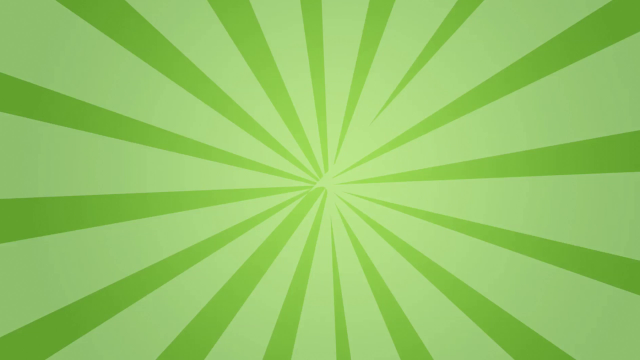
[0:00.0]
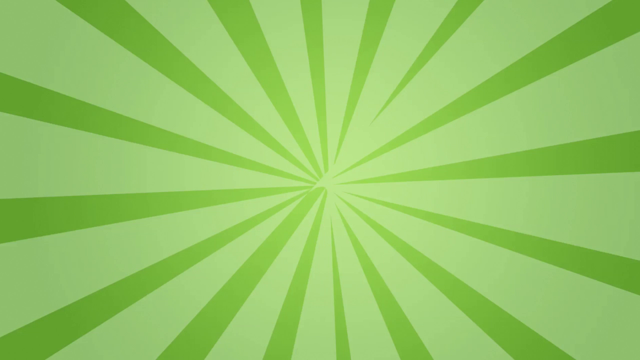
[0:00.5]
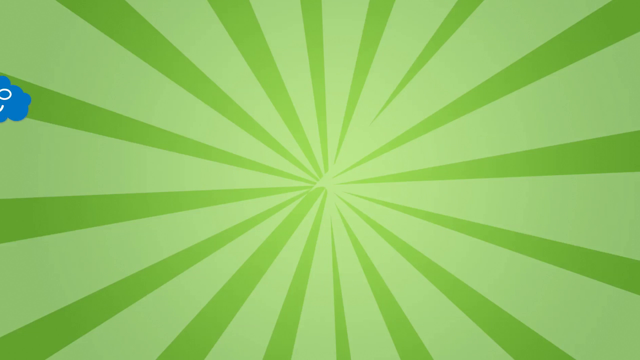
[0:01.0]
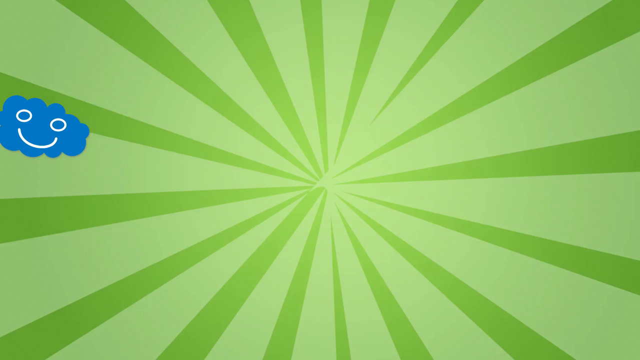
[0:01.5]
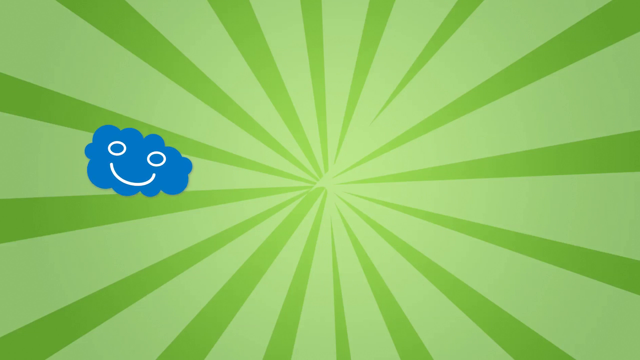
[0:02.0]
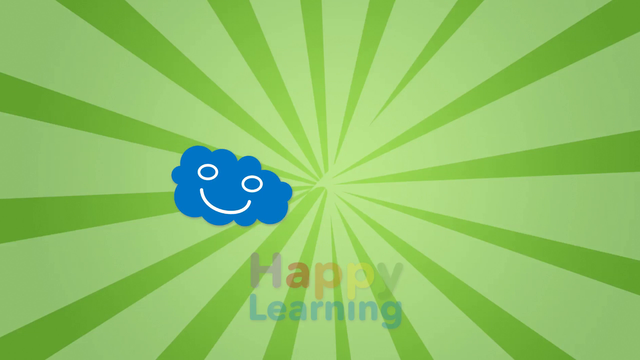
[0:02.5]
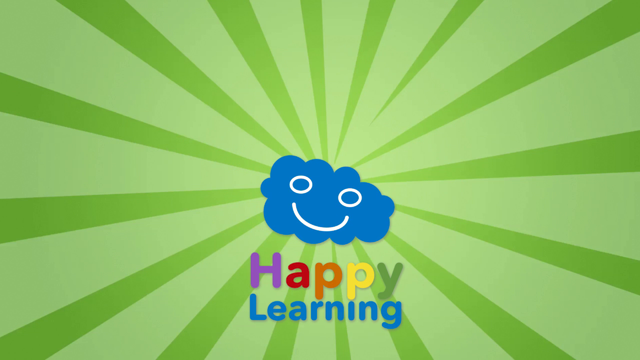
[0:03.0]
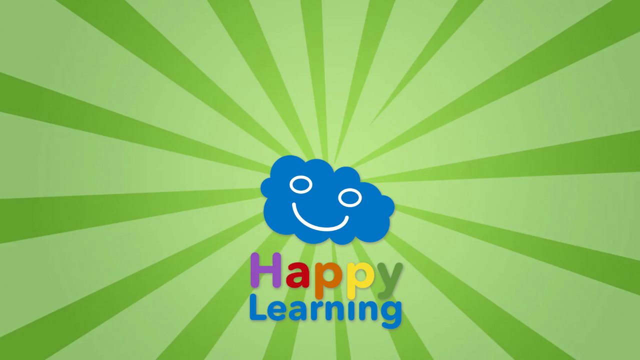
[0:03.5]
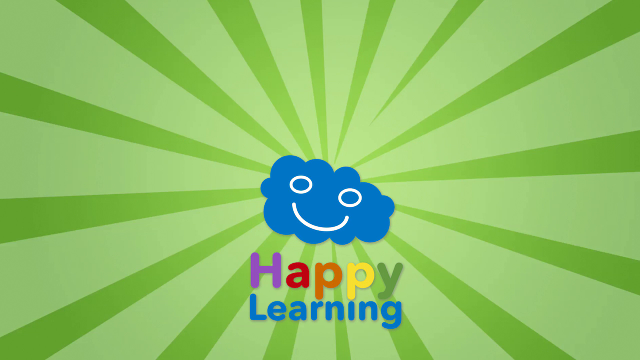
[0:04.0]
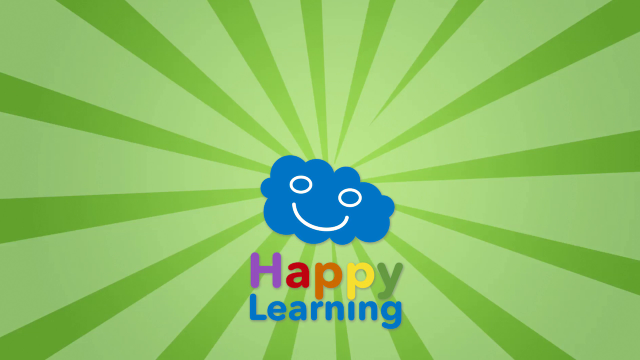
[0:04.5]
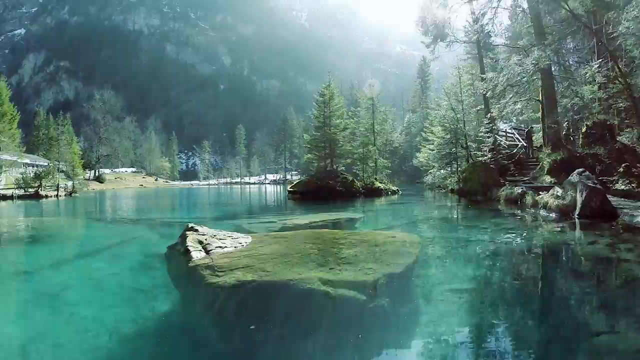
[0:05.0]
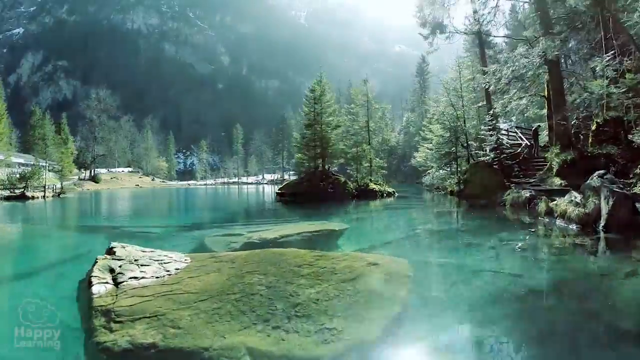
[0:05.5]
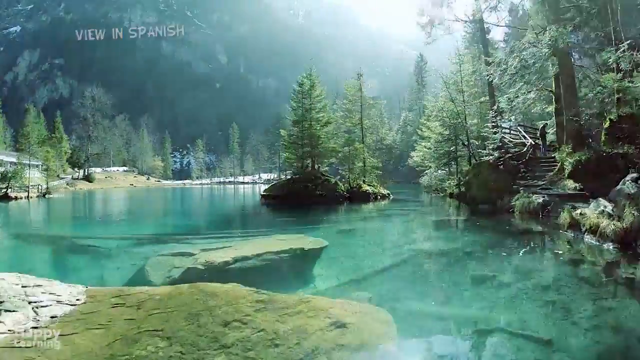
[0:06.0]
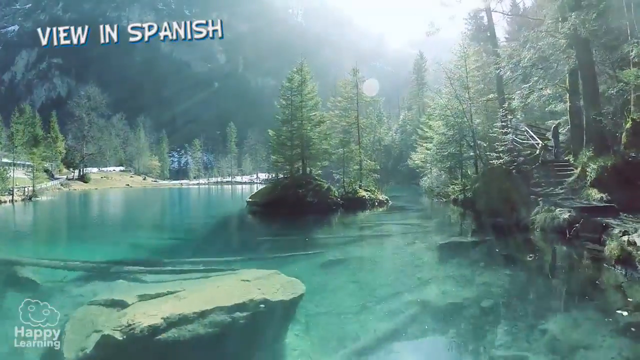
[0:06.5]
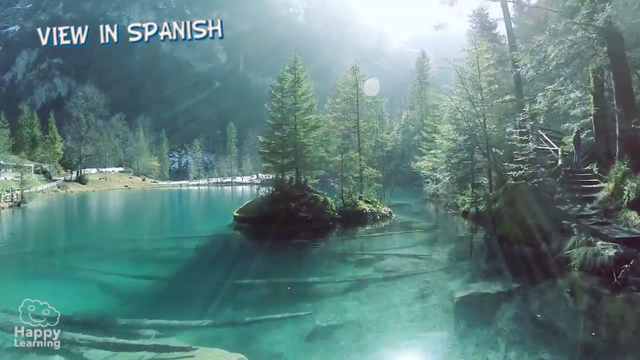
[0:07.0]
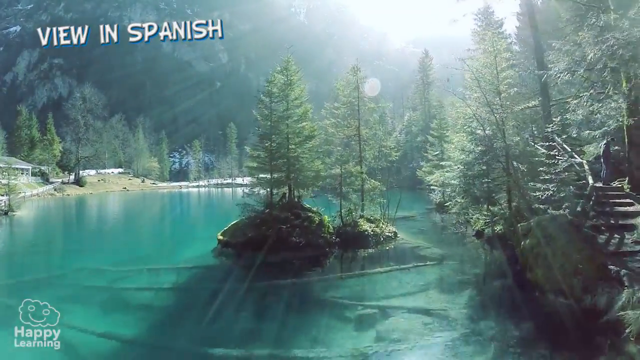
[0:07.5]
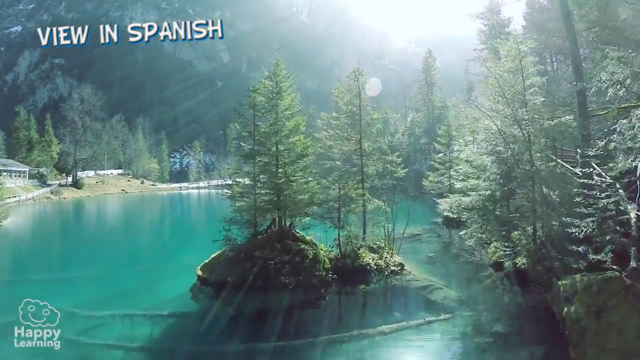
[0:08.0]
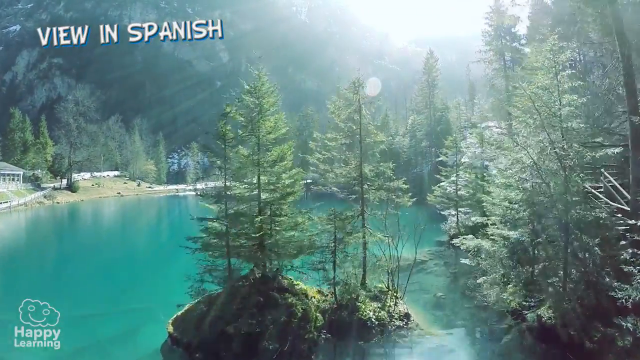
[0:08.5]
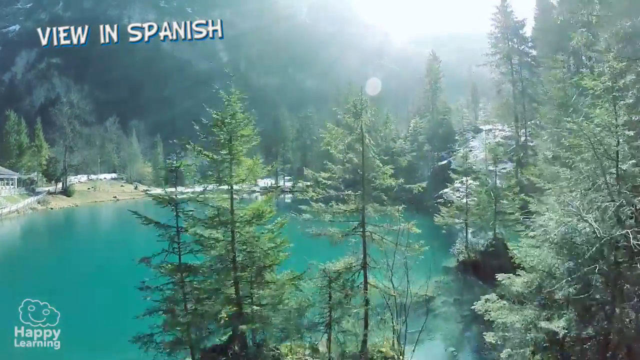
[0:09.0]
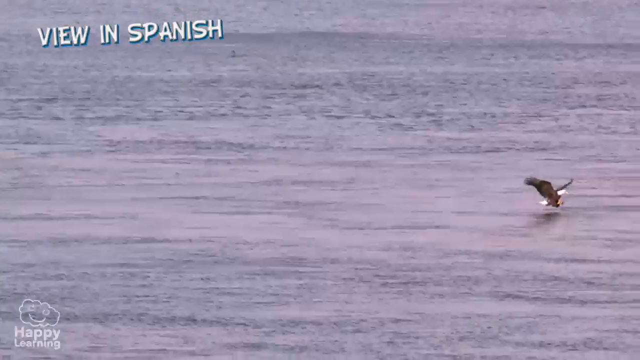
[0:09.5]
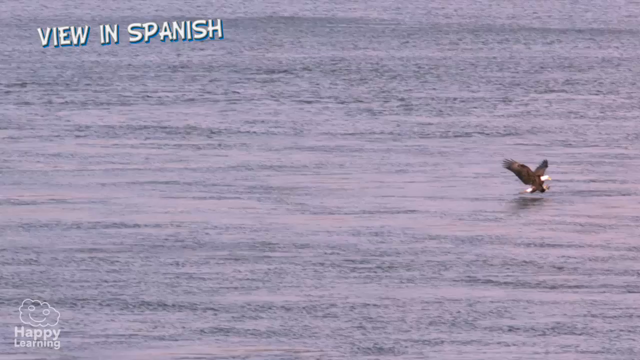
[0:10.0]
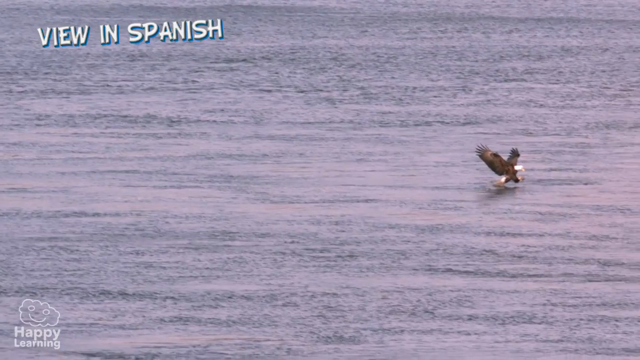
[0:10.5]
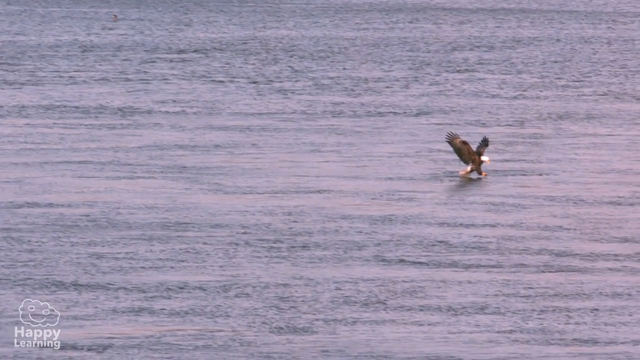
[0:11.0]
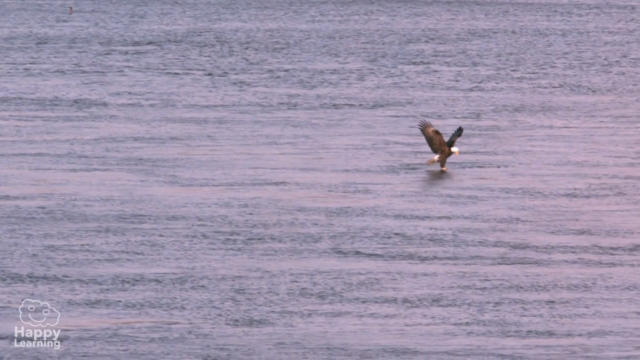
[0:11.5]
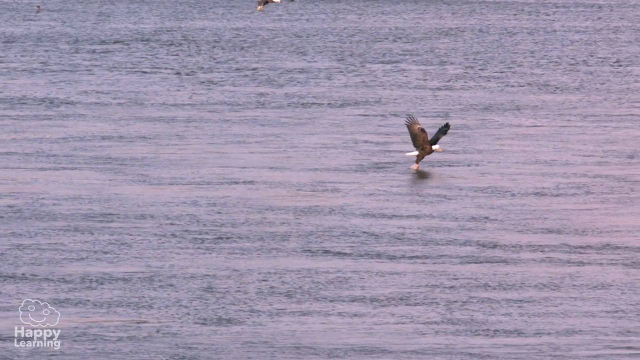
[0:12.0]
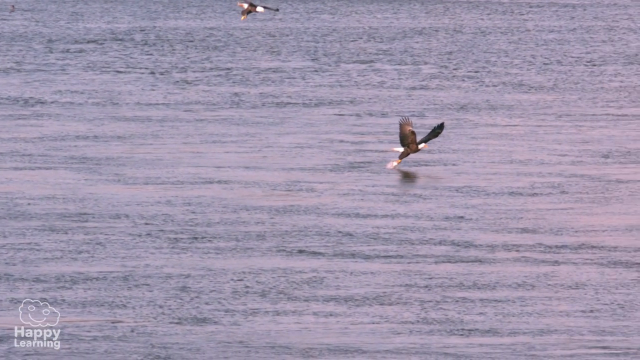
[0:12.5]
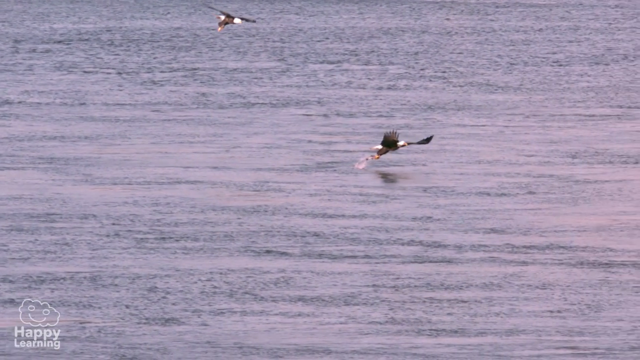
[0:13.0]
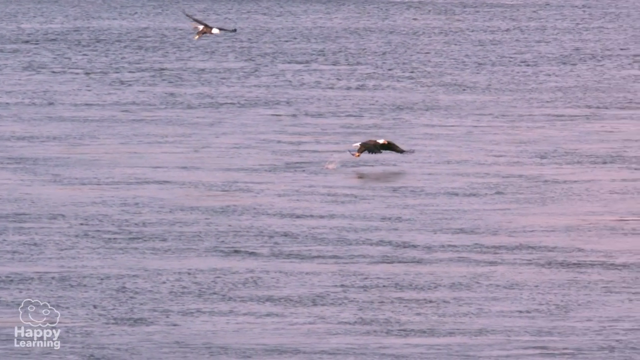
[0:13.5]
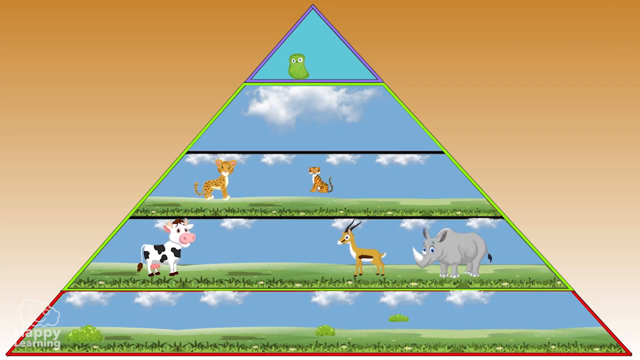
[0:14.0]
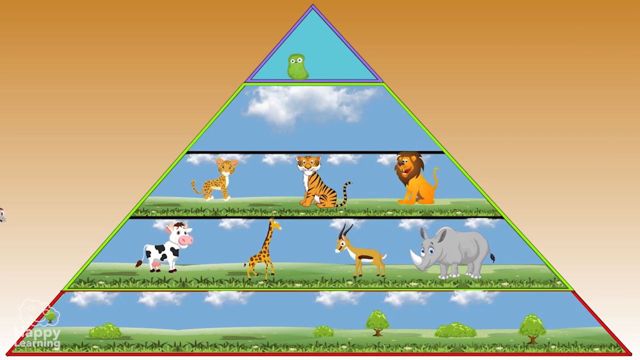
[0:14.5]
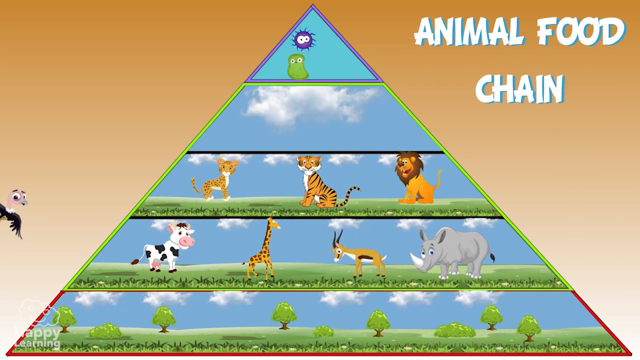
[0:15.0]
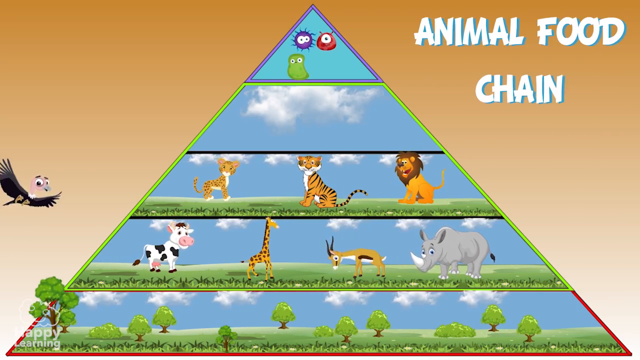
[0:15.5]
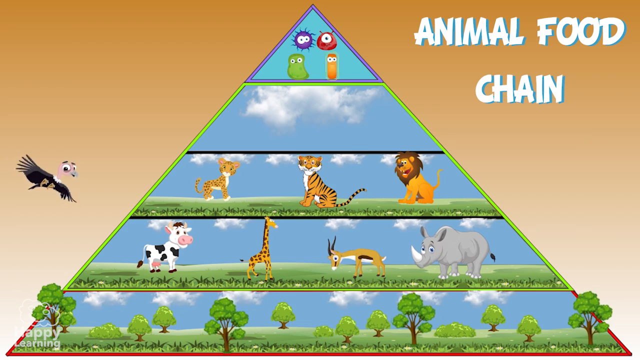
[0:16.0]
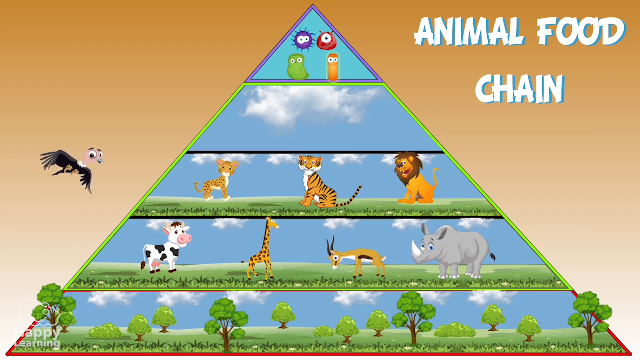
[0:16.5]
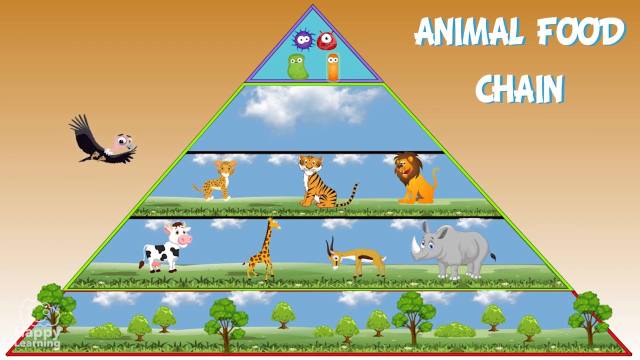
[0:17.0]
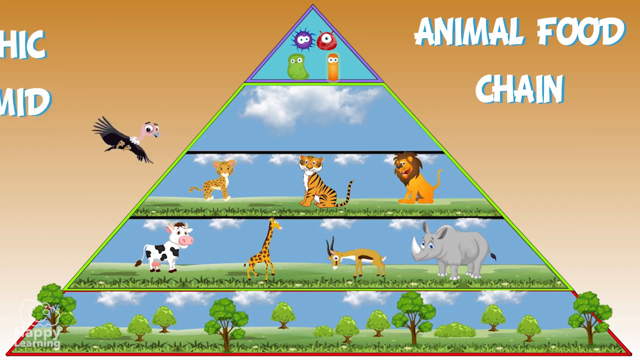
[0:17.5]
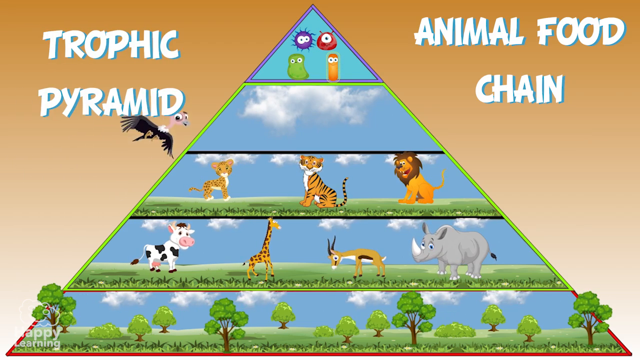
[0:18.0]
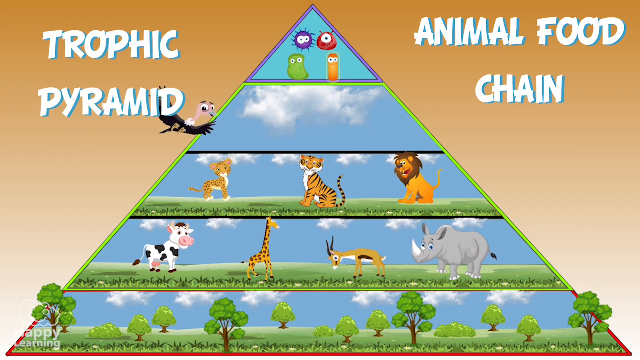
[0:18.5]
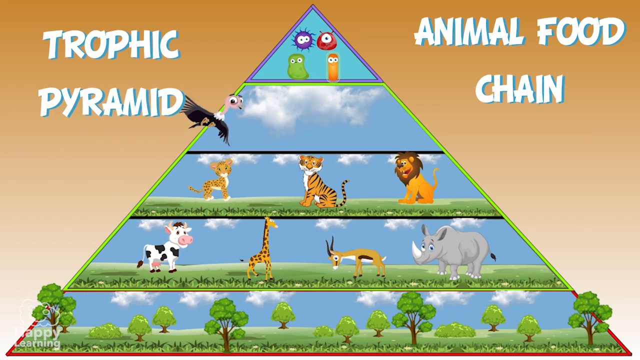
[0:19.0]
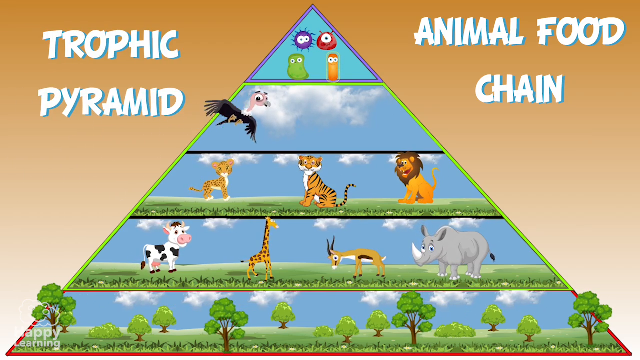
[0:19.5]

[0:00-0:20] The video opens on a title screen with a green background. A blue cloud with a white smiley face floats in from the left toward the center, and below it the word "Happy" appears in multicolored letters, with the word "Learning" in blue beneath that, making the title "Happy Learning." Next comes stock footage, possibly drone video, of a nature area with water and trees. It transitions to a vast view of the ocean, where what looks like an eagle swoops down with another one farther behind it, possibly catching fish. Then "Animal Food Chain" is shown: a pyramid with cartoon animations of various animals such as a cow, a giraffe, a rhinoceros and a lion, lined up on different rows of the pyramid from the bottom to the top. To the left is the text "Trophic Pyramid."